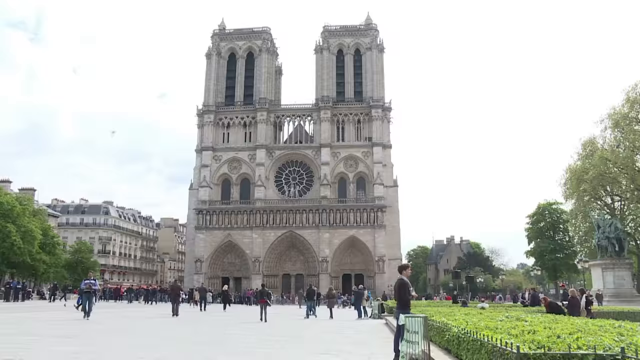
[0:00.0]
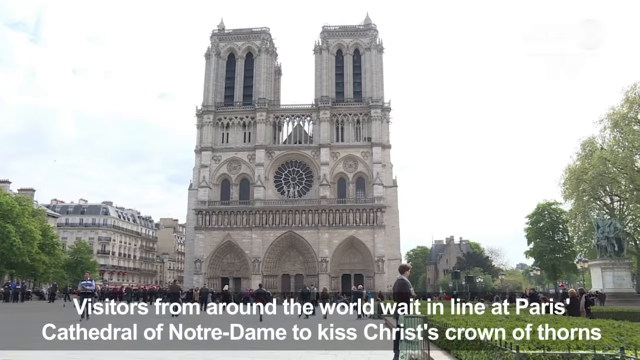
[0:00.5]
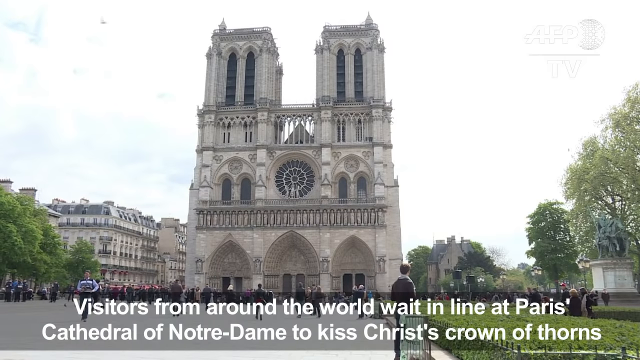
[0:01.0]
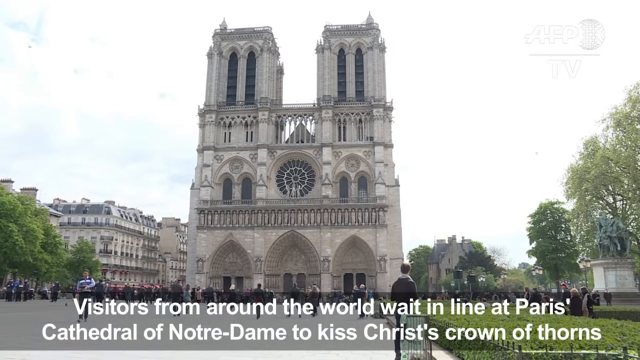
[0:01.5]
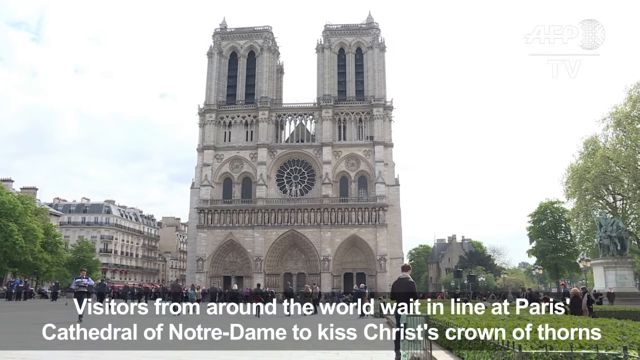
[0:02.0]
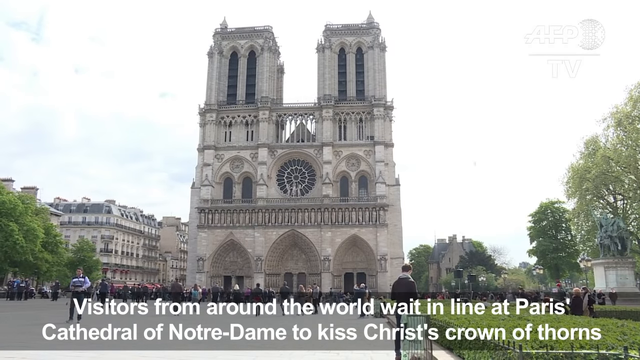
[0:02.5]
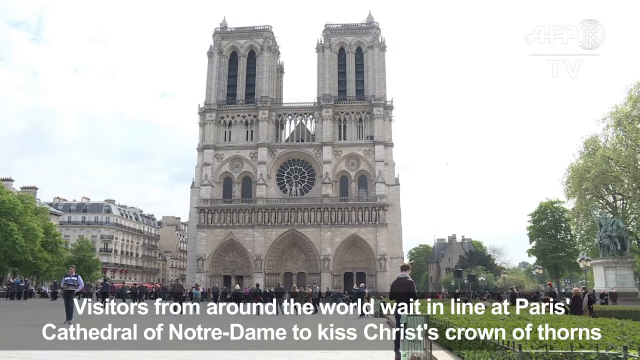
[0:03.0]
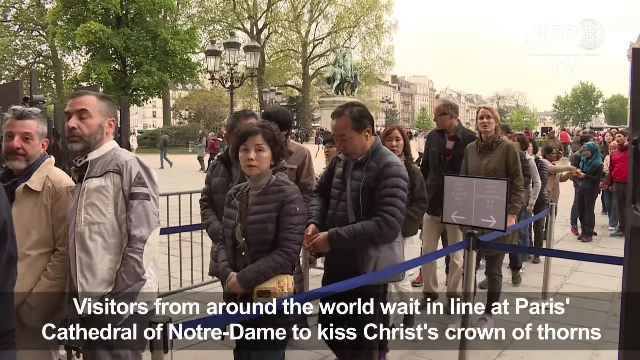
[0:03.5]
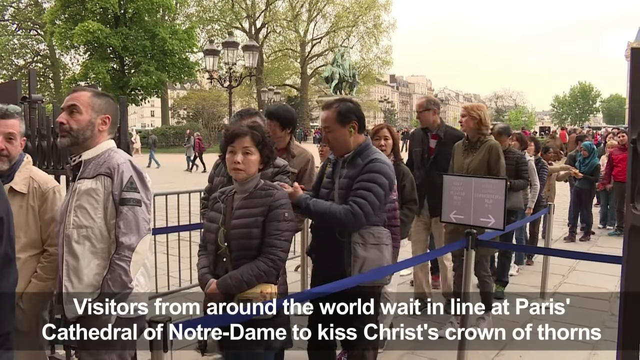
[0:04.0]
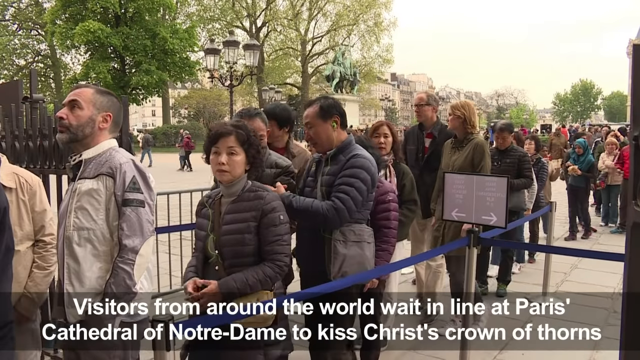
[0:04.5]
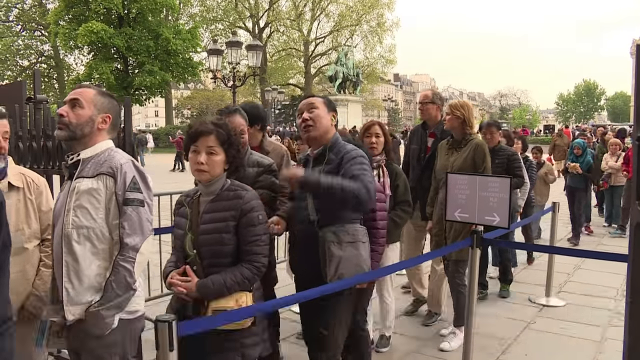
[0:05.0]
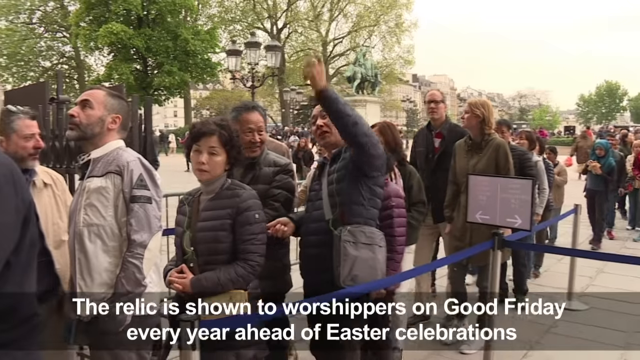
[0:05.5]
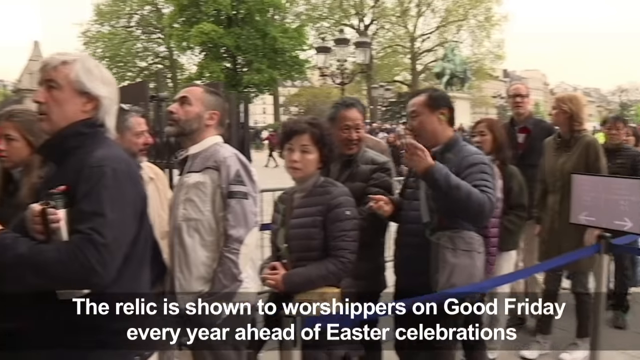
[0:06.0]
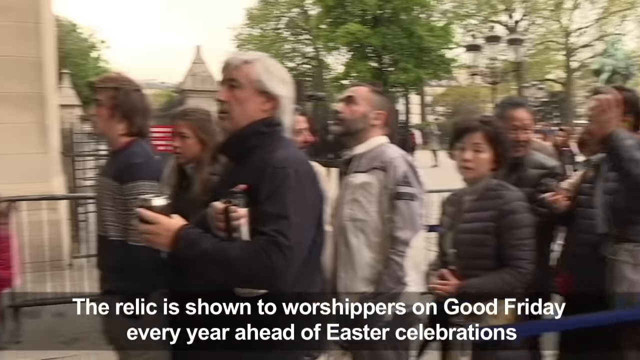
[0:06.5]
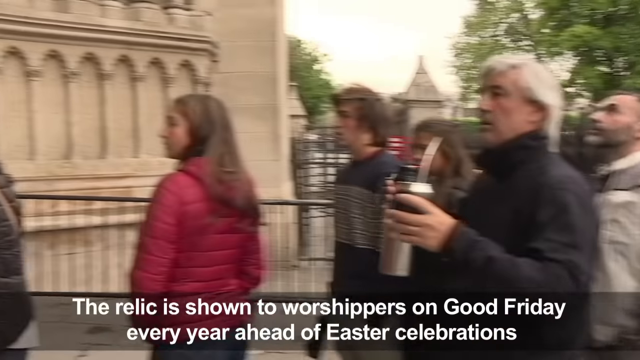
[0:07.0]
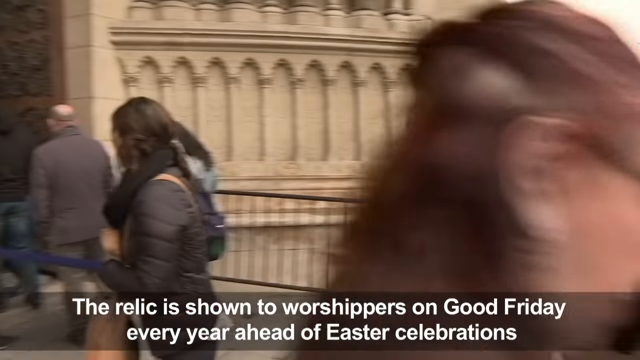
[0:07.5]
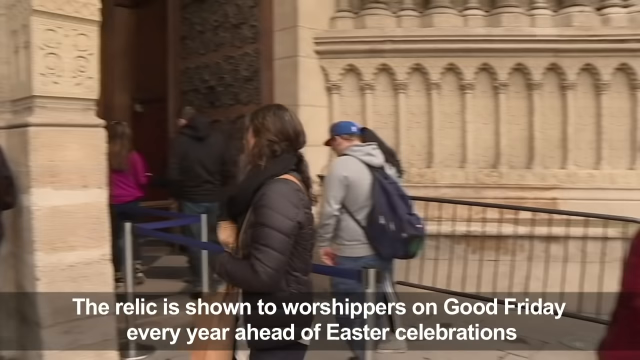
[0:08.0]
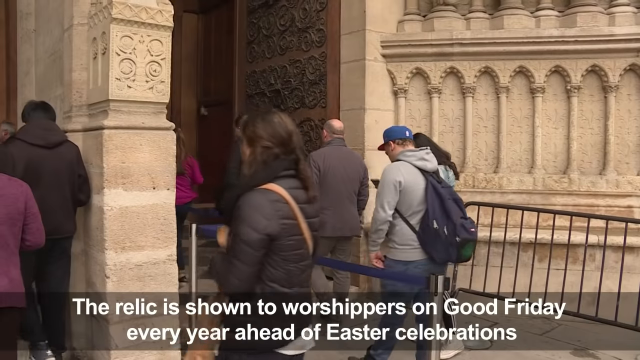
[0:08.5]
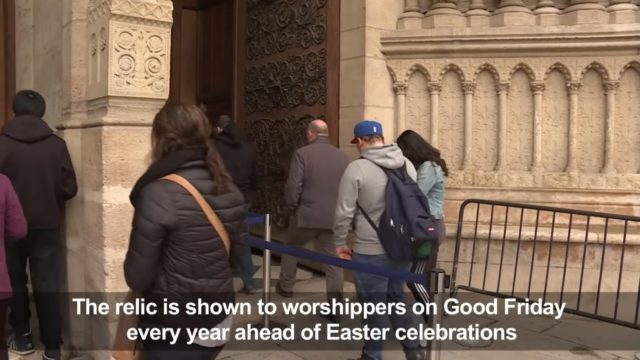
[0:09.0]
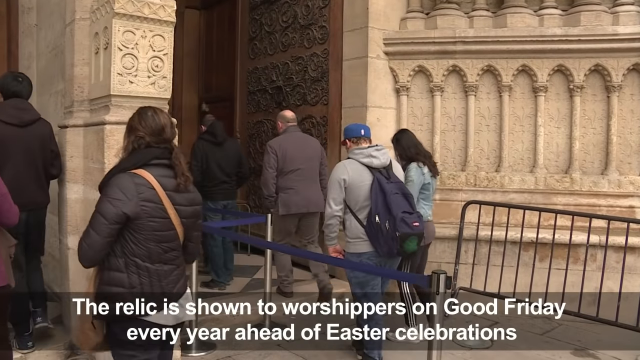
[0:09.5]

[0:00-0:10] The video opens on an exterior view, apparently of Notre Dame, on what looks like a spring day. Closed captions run along the bottom of the screen. Chinese people are waiting in line outside. A priest, Monsignor Patrick Cheveux, rector of Notre Dame de Paris, then appears and speaks to the camera. Apparently there is a relic that people kiss, and a bunch of people are gathered there.